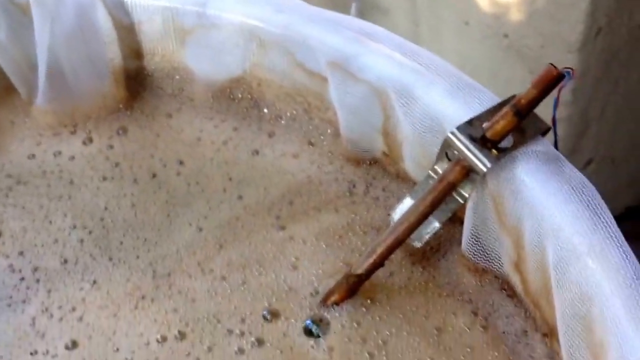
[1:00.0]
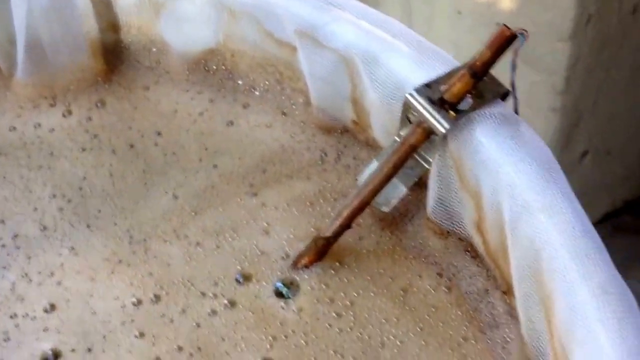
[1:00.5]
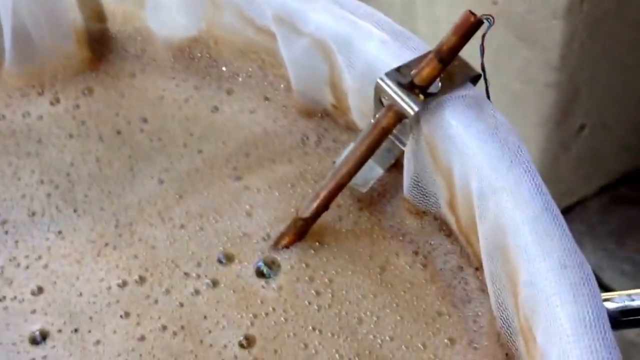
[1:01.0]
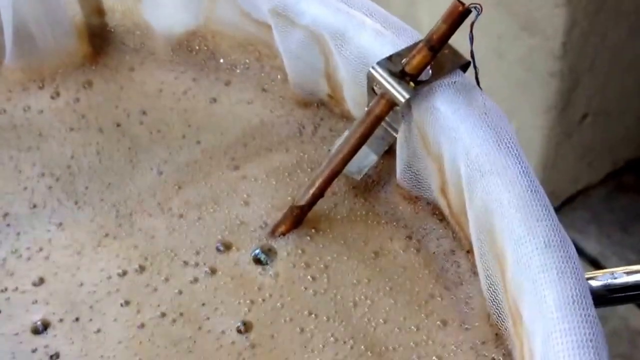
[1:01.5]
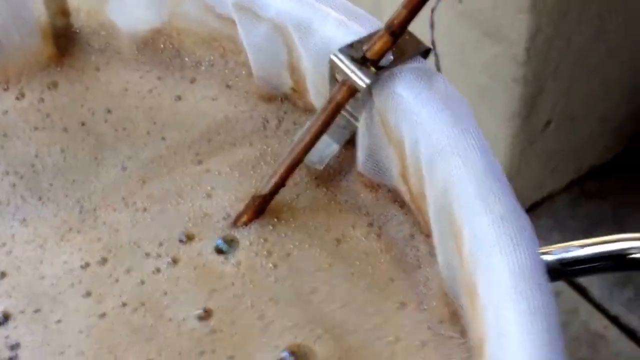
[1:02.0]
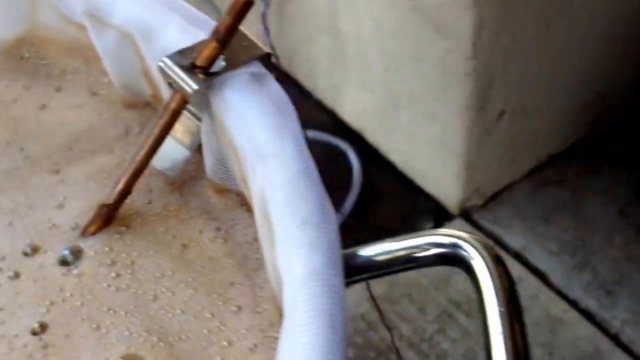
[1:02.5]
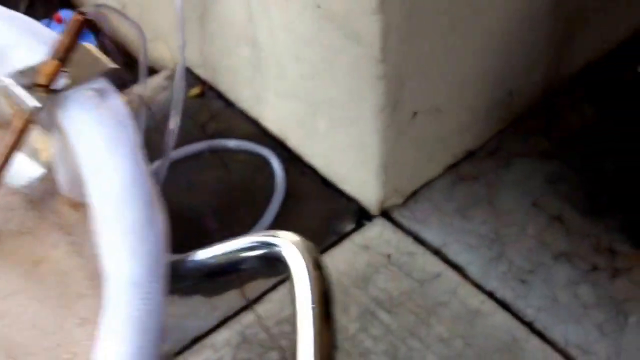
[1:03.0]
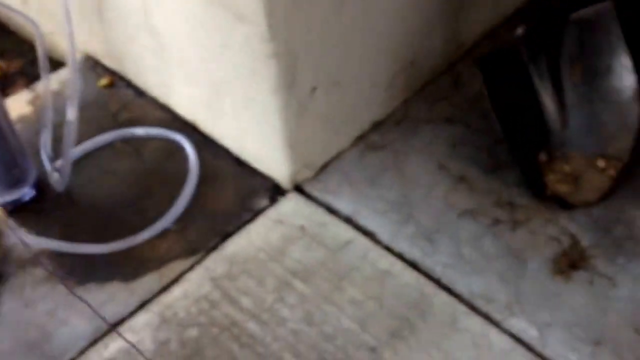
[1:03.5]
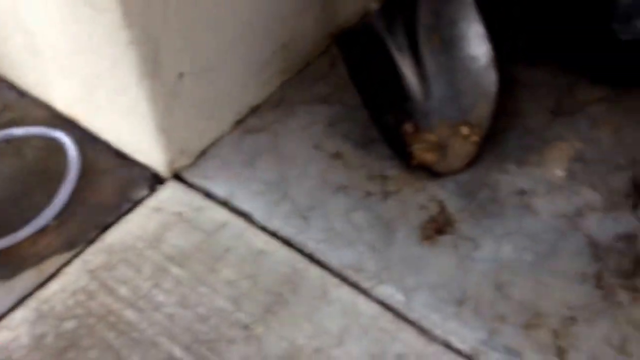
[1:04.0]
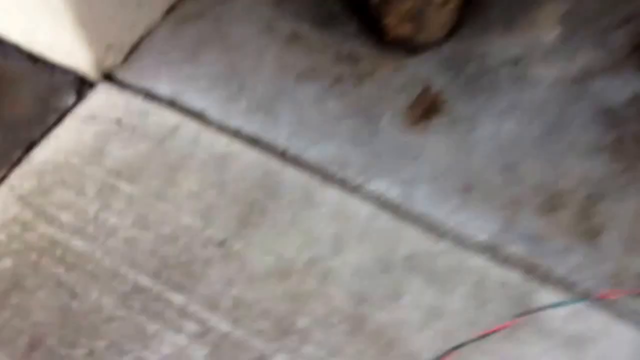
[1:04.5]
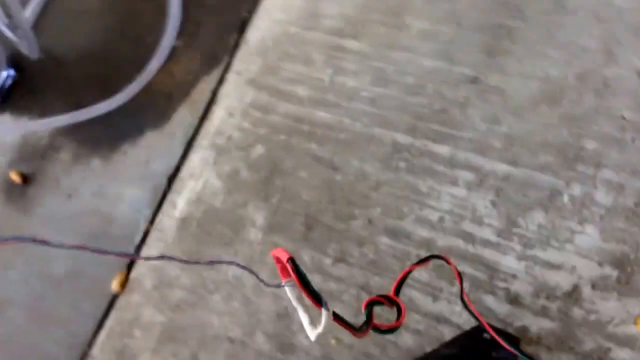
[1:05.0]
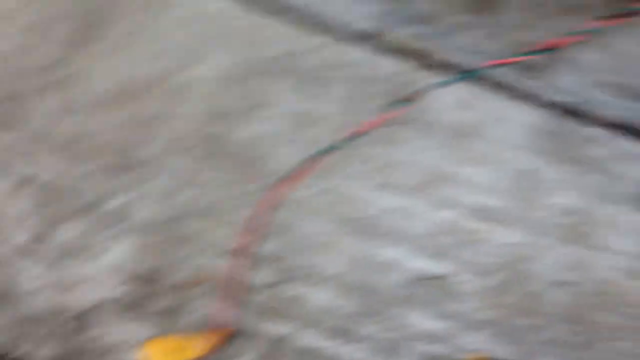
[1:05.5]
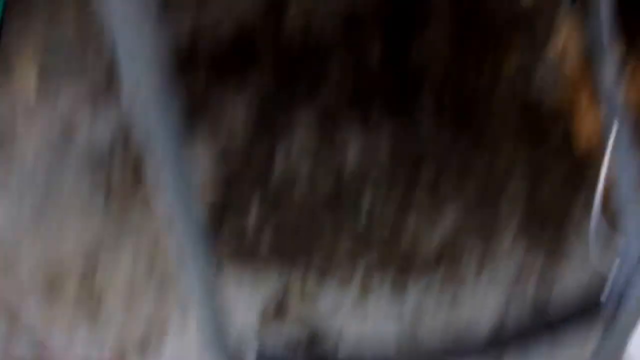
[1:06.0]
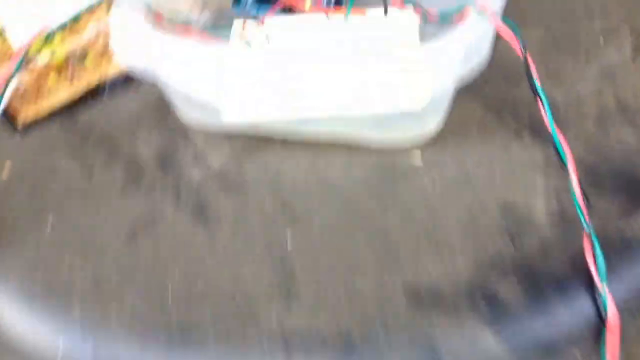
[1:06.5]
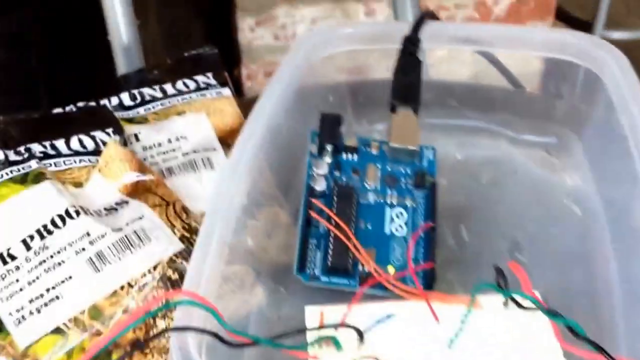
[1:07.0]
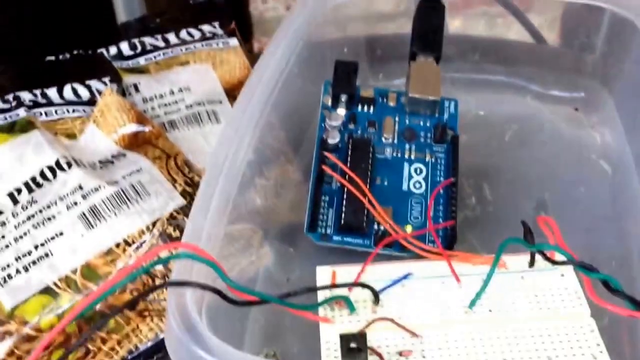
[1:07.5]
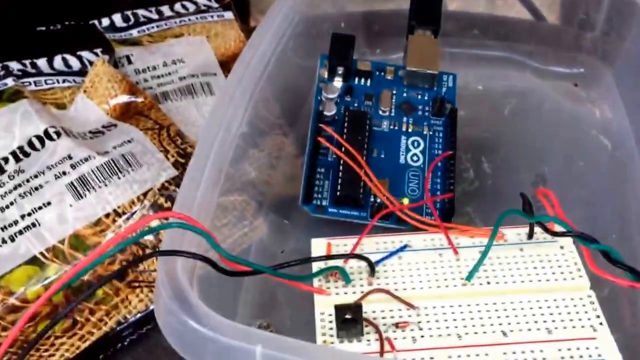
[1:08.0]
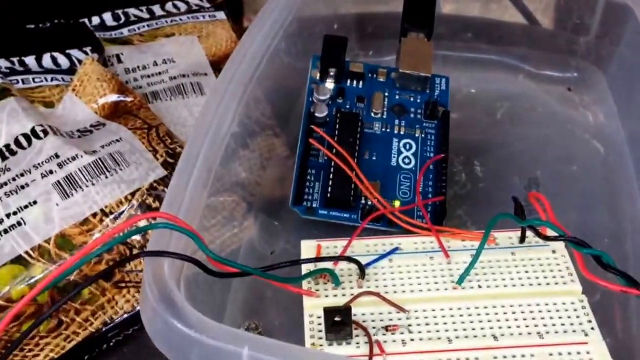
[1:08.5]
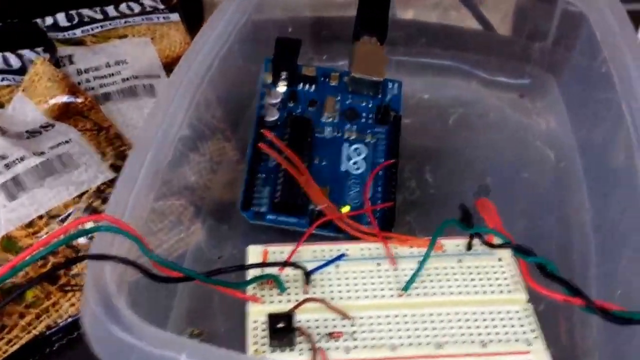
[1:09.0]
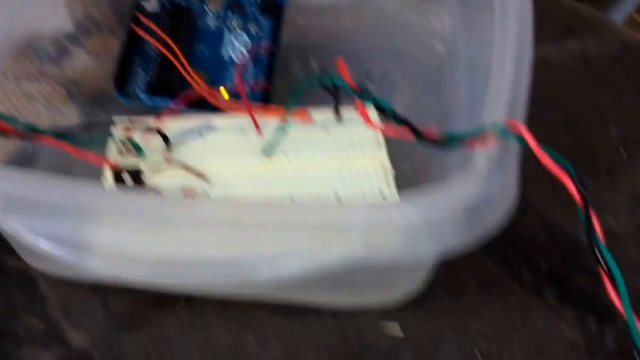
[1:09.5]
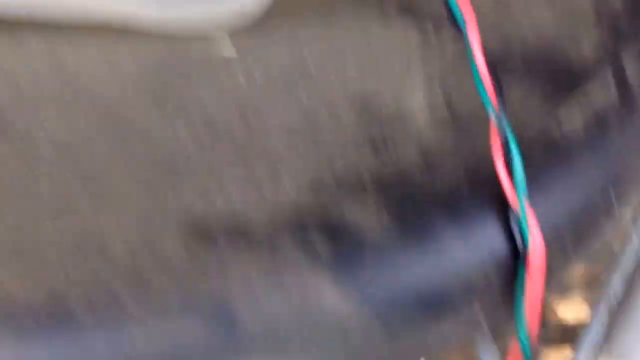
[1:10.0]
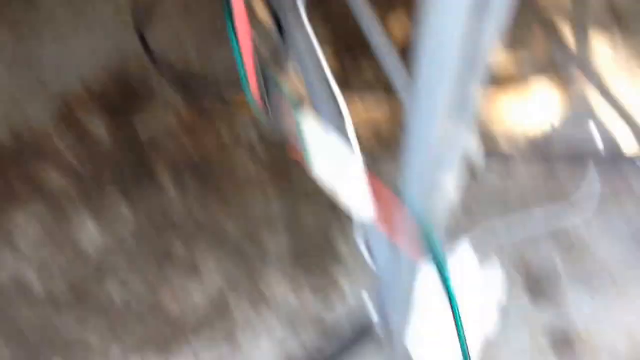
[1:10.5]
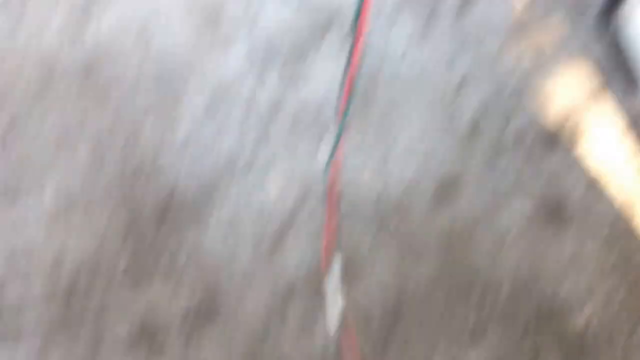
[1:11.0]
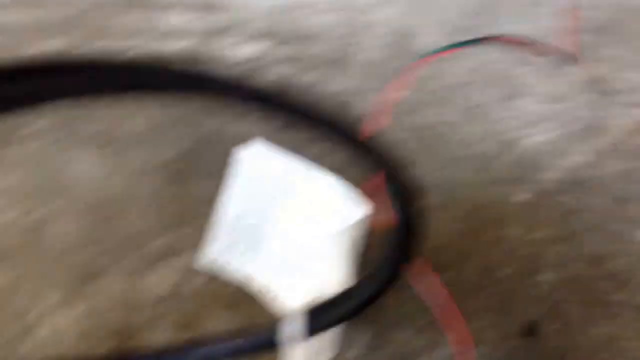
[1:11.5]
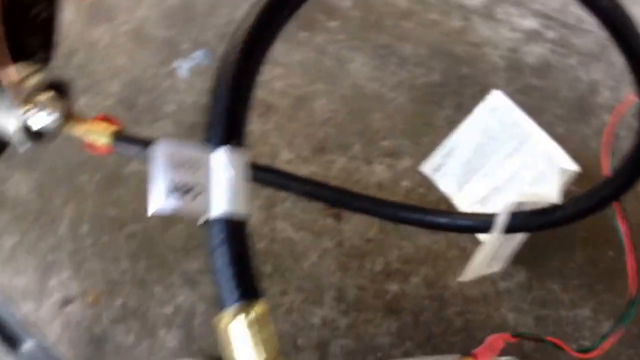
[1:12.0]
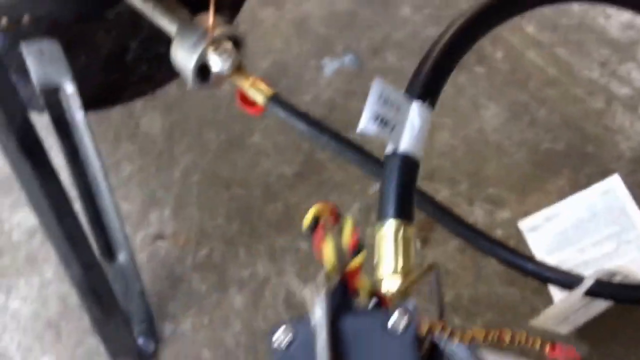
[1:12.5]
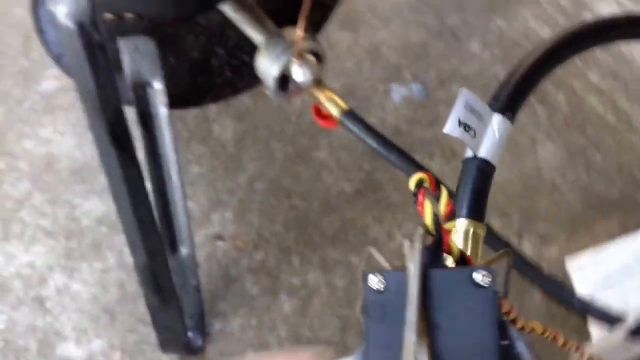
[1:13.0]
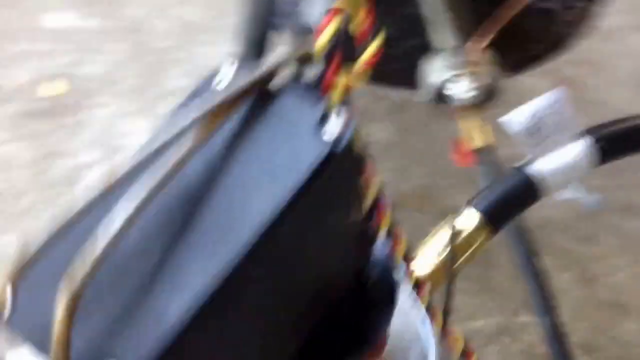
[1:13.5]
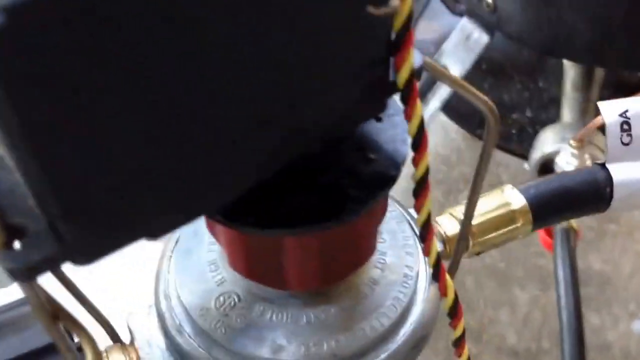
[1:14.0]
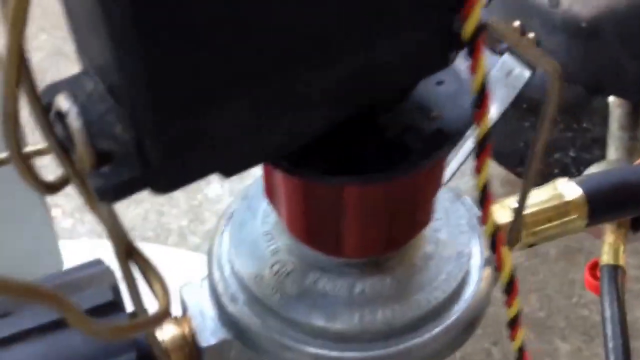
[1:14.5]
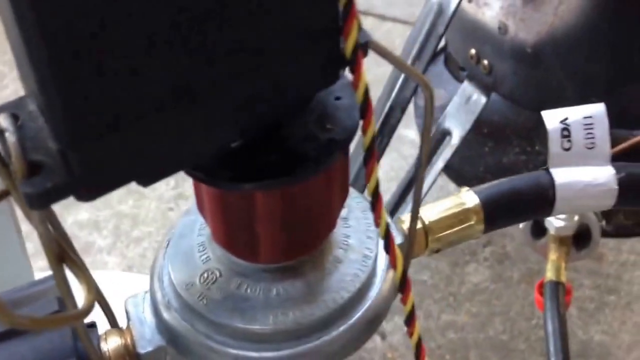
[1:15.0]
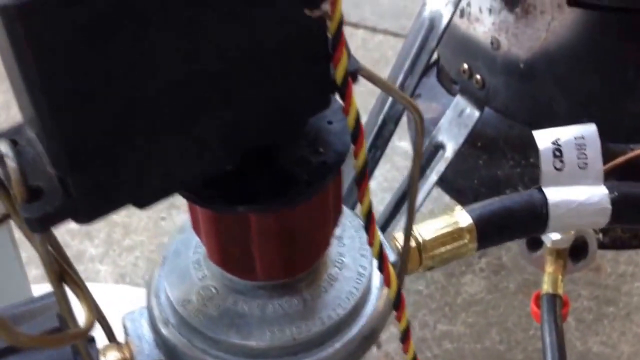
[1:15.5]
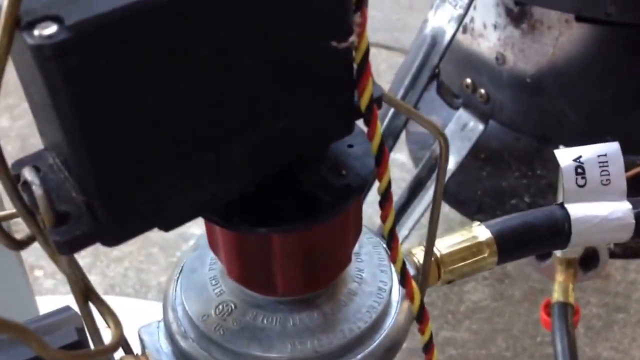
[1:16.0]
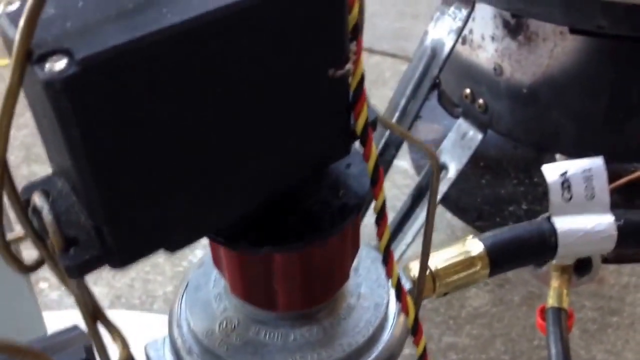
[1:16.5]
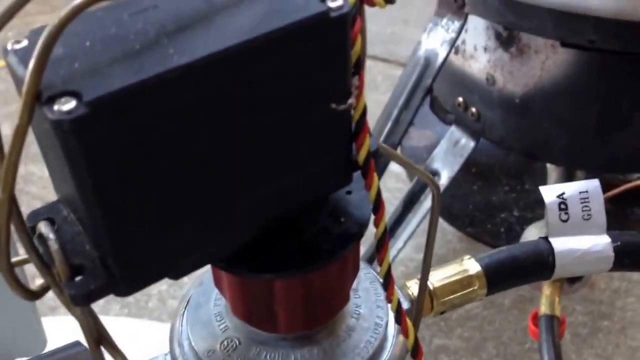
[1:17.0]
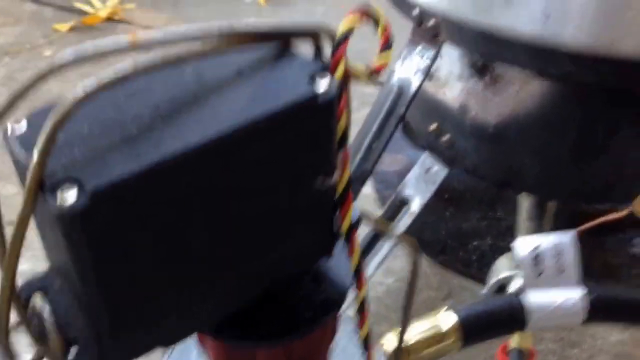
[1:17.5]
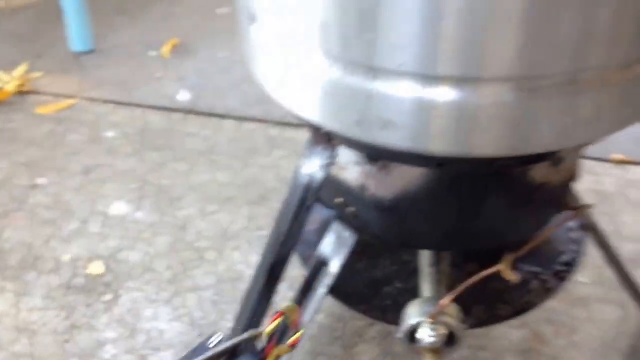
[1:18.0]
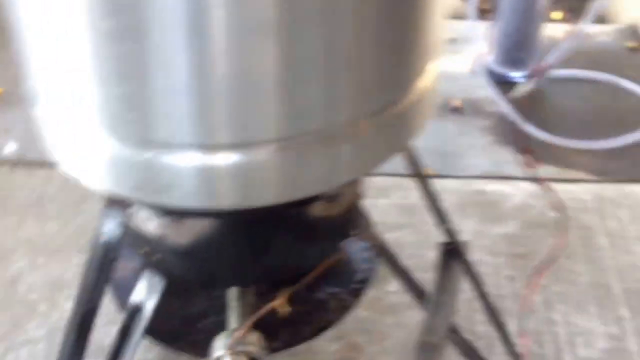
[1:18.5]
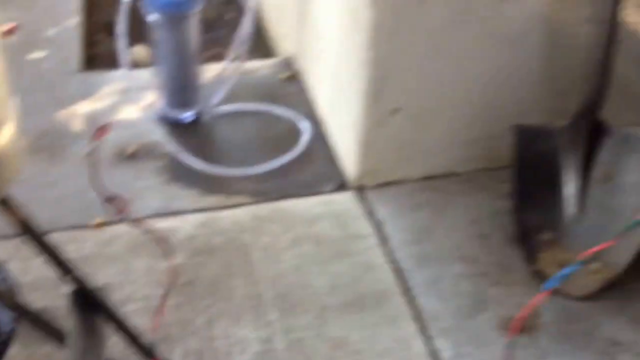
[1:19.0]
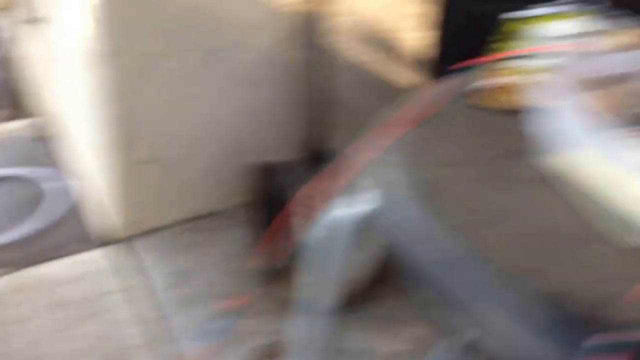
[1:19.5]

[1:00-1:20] The shot opens on a large pan holding a muslin bag that goes up and around the rim. Inside the bag and pan is a brown liquid with a cream foam on top. In close-up, a metal temperature probe is attached to the side of the pan, going into the liquid, with wires coming out of it. The camera pans down and follows the wire up to an Arduino controller board and an electrical breadboard with wires going into it. Down the other side, another set of wires comes off the breadboard and goes to what appears to be a servo motor attached to the valve of a gas canister. From the valve, a long black hose leads to a stove underneath the metal pan.